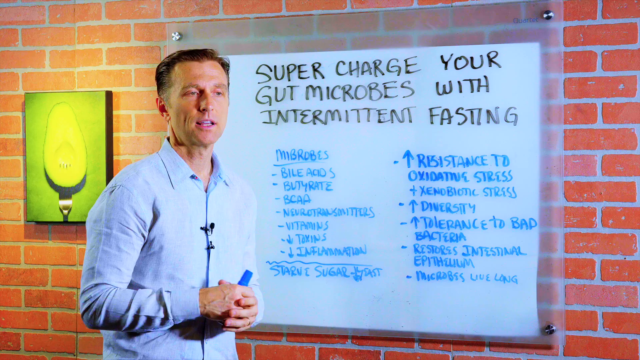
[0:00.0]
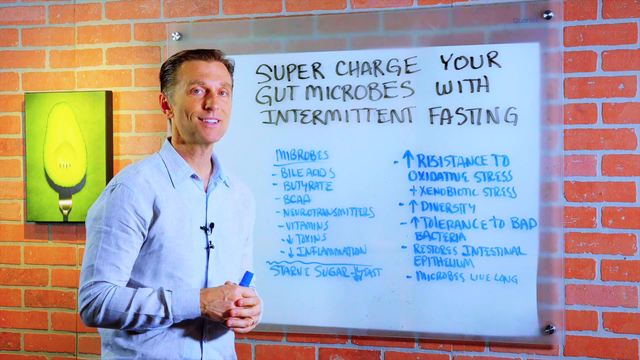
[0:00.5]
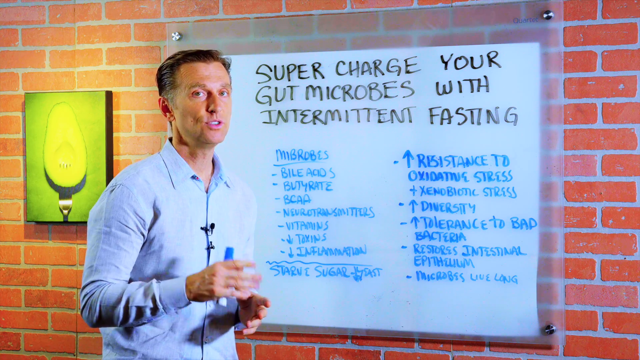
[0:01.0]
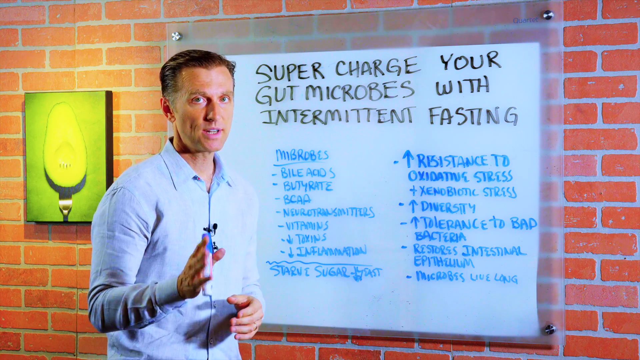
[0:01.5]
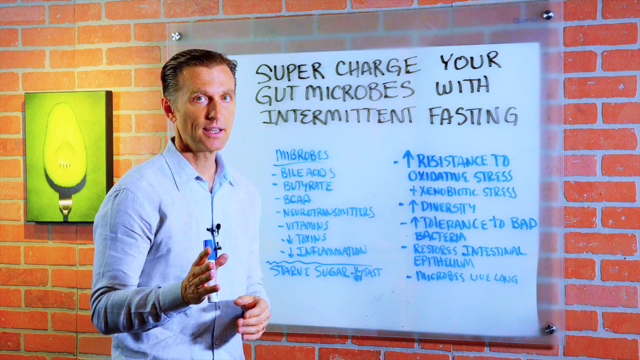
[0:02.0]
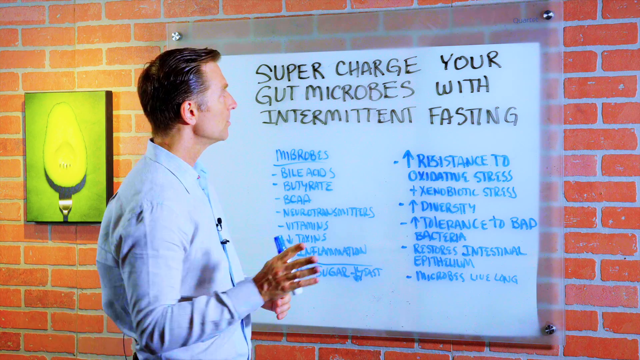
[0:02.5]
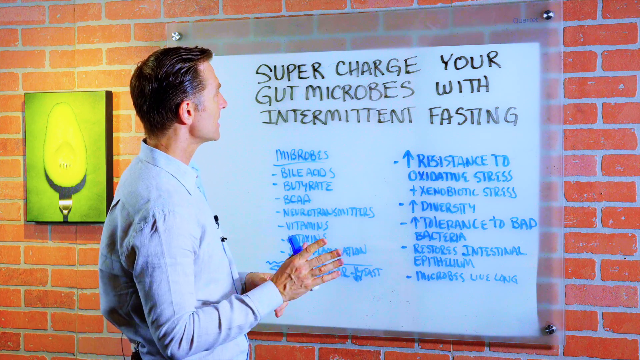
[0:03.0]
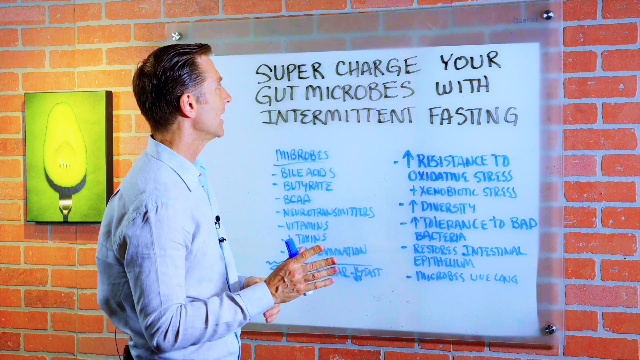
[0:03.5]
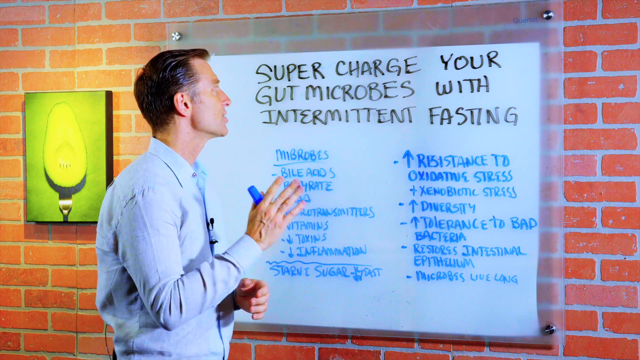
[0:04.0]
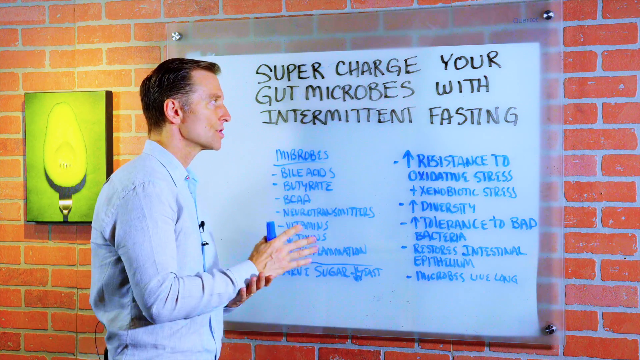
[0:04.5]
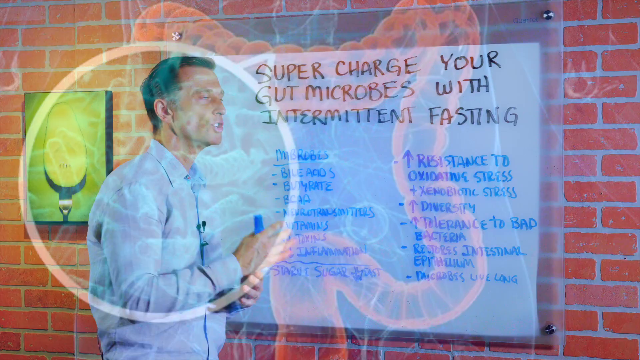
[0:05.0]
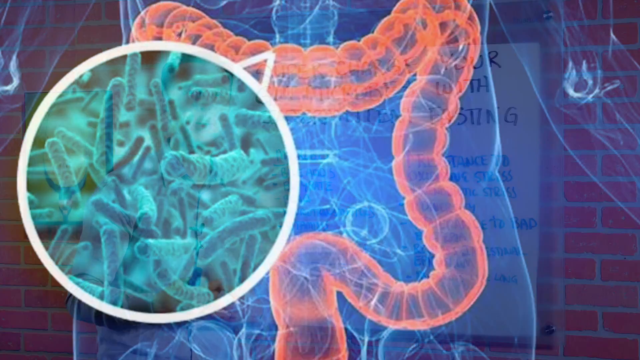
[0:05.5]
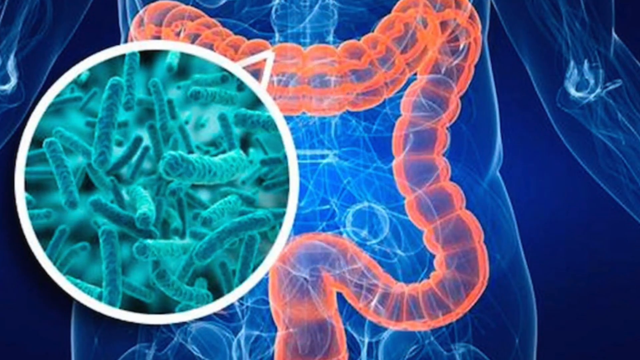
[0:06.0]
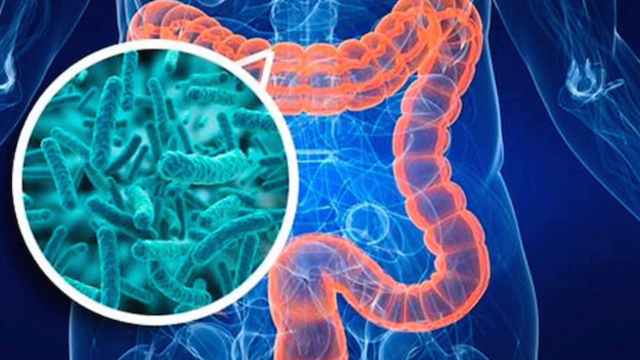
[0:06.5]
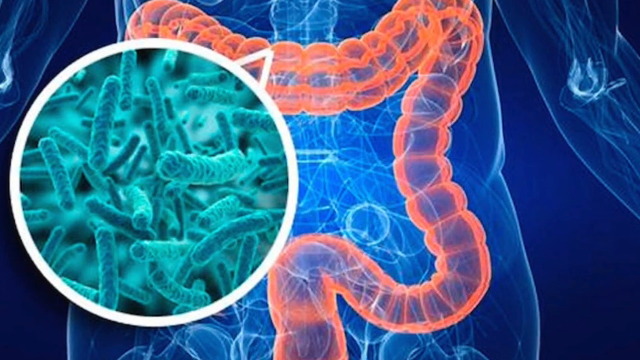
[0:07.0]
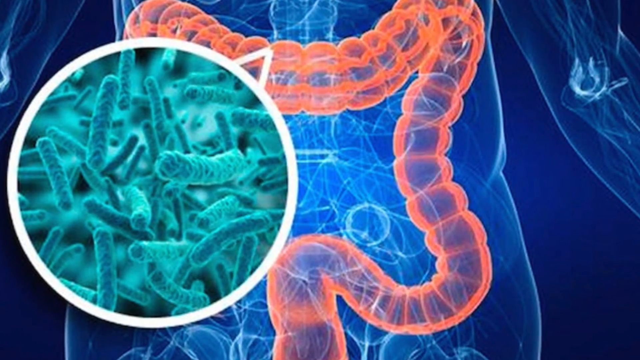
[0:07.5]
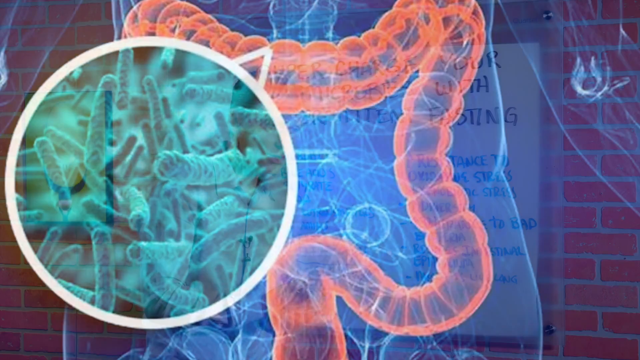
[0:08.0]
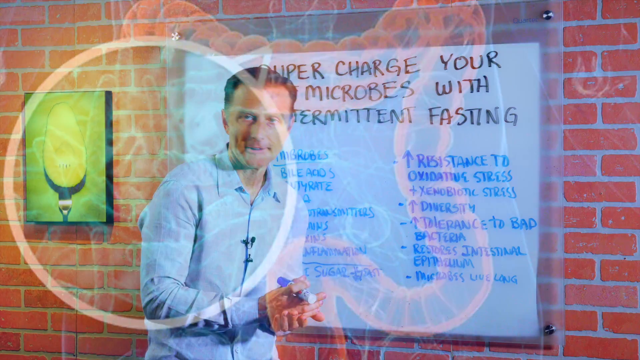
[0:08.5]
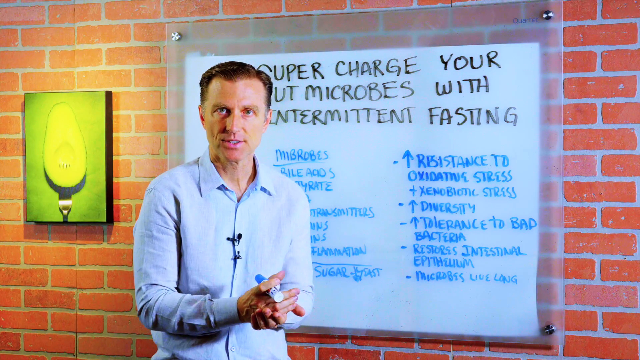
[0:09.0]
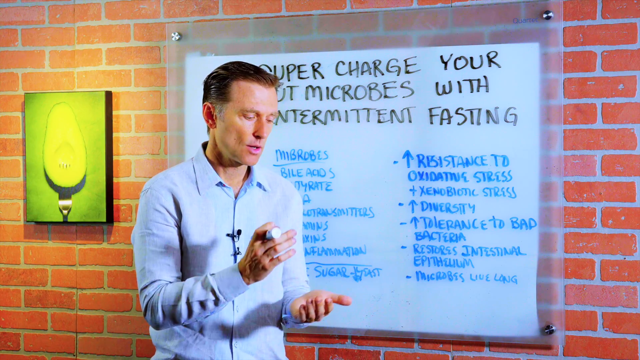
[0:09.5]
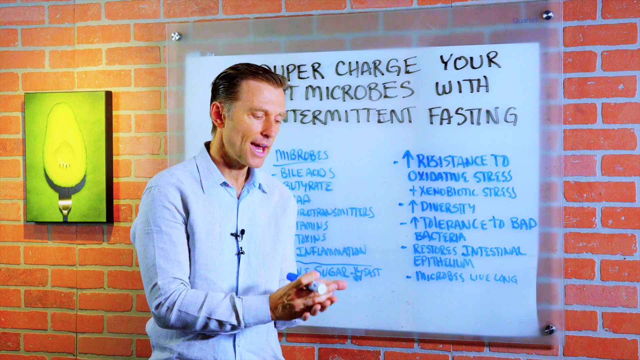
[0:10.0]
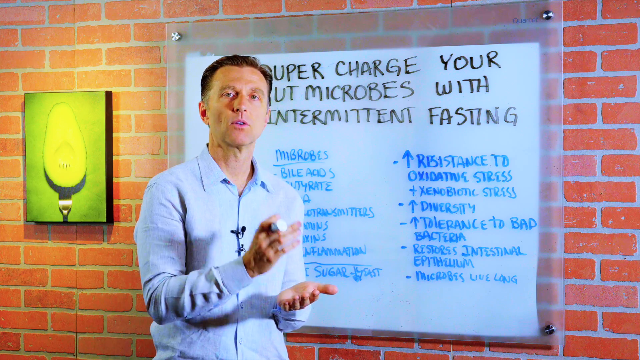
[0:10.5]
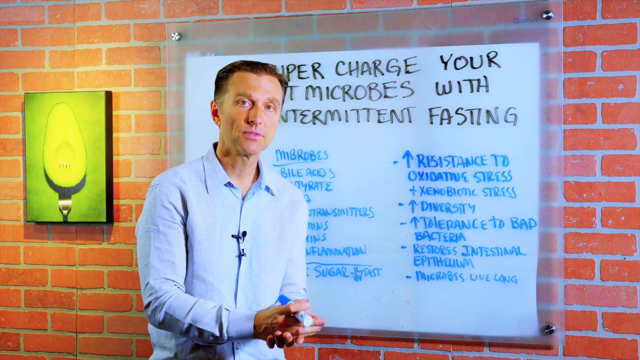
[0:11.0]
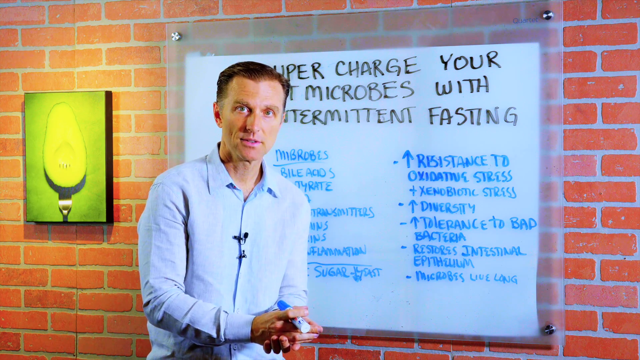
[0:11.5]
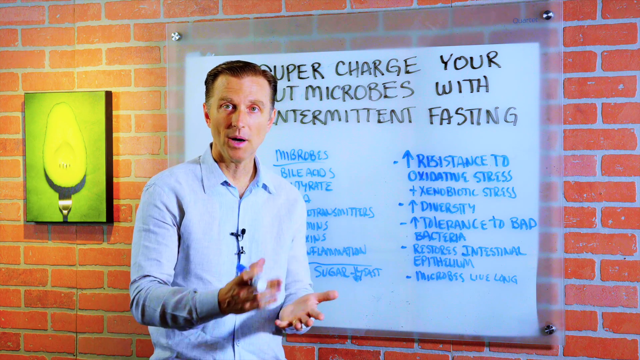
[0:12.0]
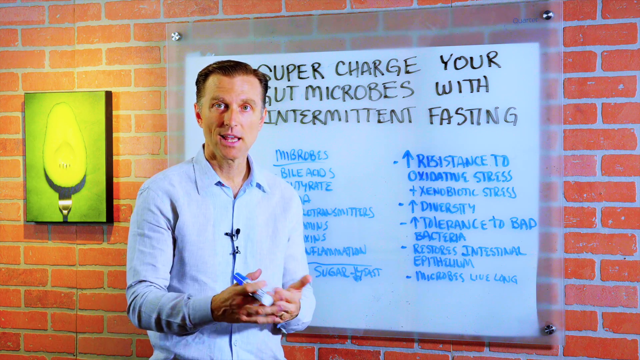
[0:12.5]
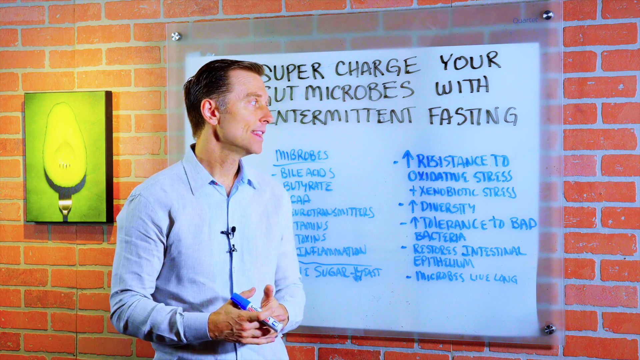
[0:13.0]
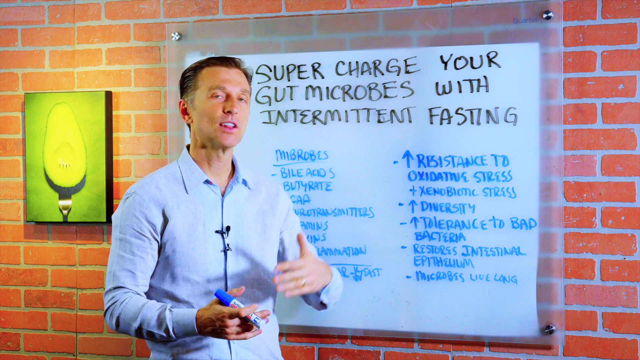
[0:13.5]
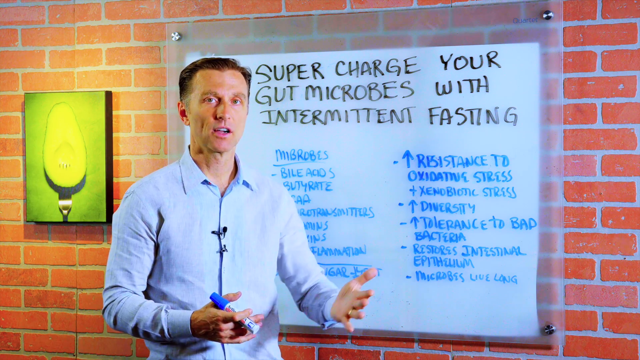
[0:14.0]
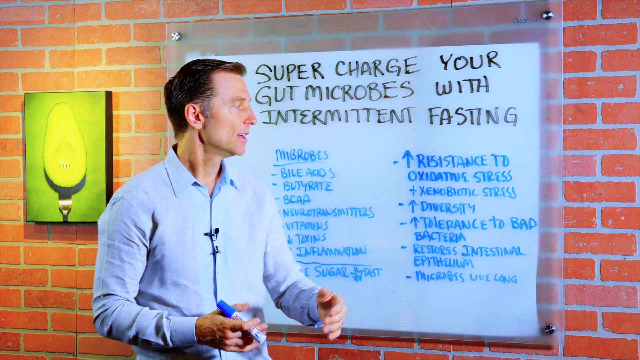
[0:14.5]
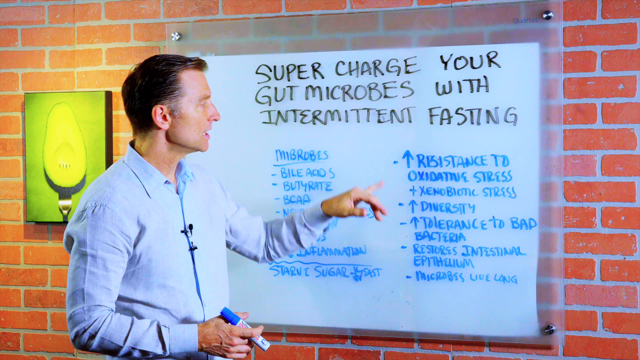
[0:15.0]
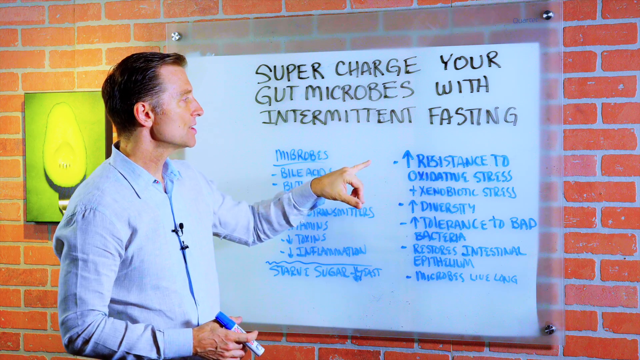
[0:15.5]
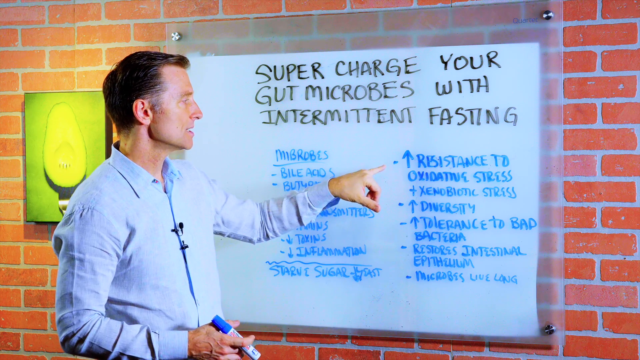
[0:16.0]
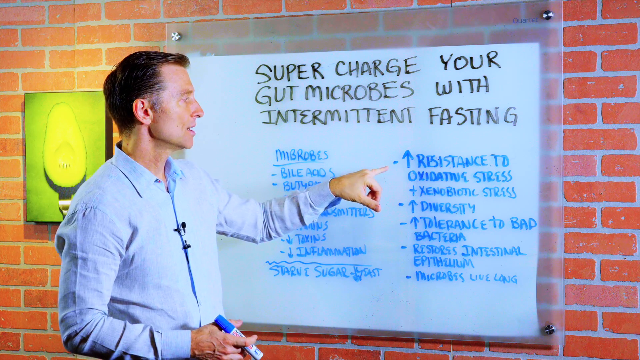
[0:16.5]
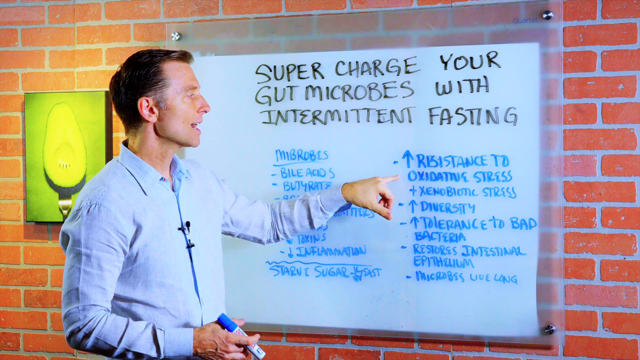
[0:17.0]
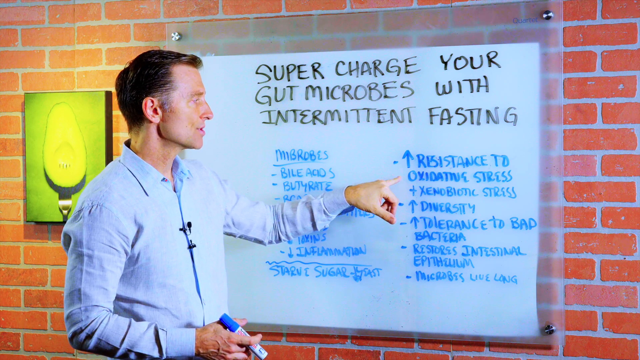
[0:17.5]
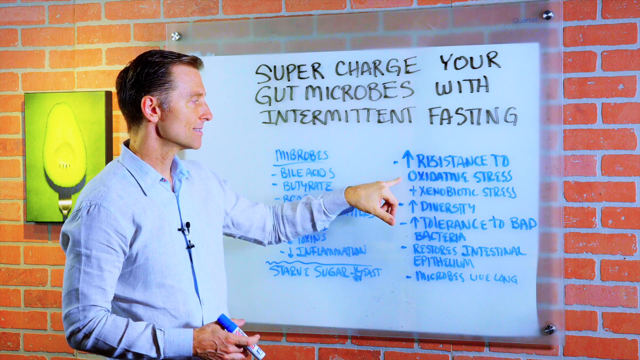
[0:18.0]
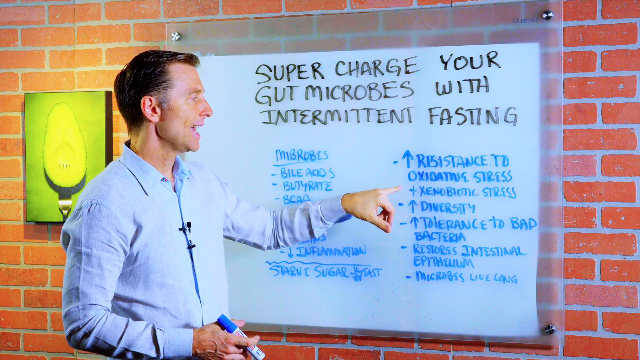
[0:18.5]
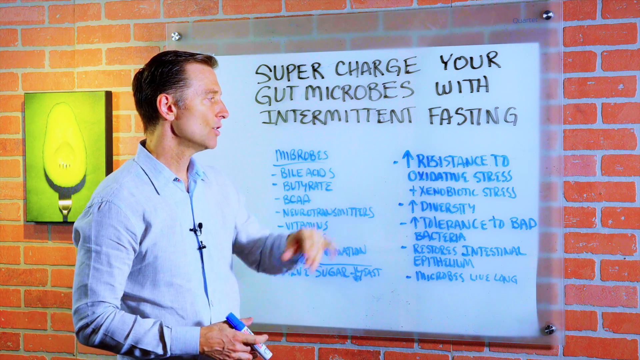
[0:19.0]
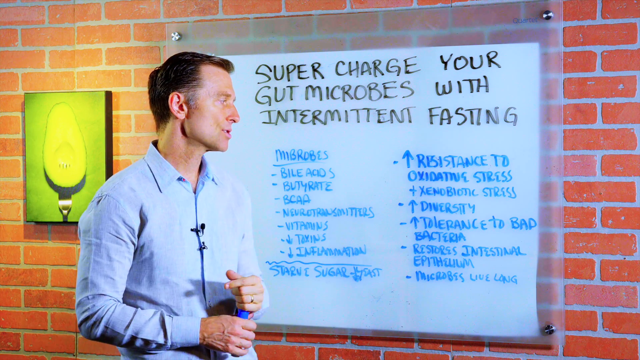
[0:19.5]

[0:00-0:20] A man in a pale blue shirt gives a presentation, standing beside a whiteboard attached to a red brick wall, with an artwork on the left side. He holds a blue marker. The whiteboard has a header in black text that reads "supercharge your gut microbes with intermittent fasting," and below it, in blue text, are two columns of detailed information. The man has black hair neatly brushed backwards and stares at the camera as he speaks. He turns to look at the whiteboard. Next, a graphical illustration shows a human large intestine inside the outline of the human body, covering the torso and pelvic region. On the left side, a white circle outline surrounds what looks like microbes seen under a microscope, and the white circle points to a part of the large intestine. The large intestine stands out in reddish orange against the blue and white background of the human form. The man appears on screen again; as he speaks, he gestures with his hands and points to the blue text on the whiteboard.